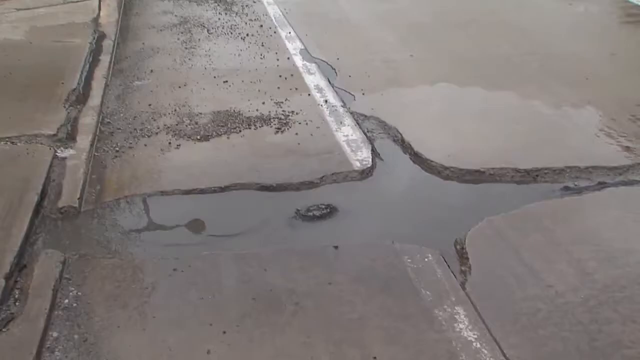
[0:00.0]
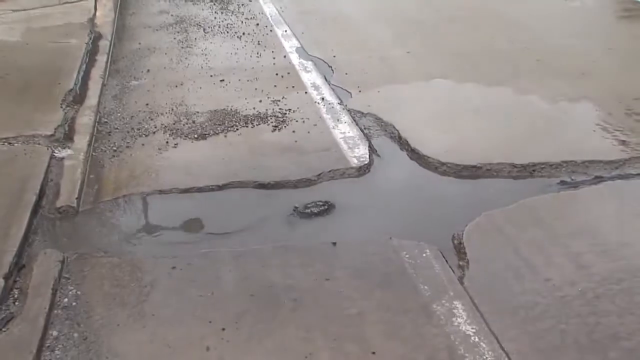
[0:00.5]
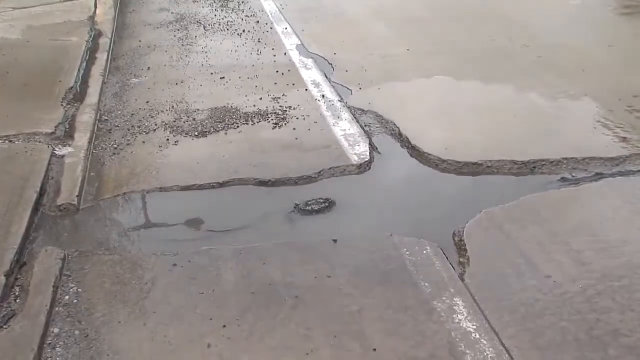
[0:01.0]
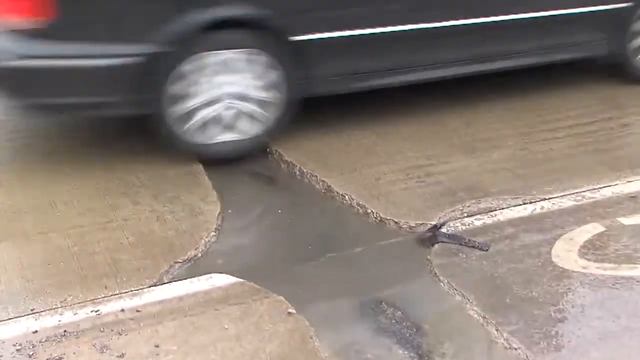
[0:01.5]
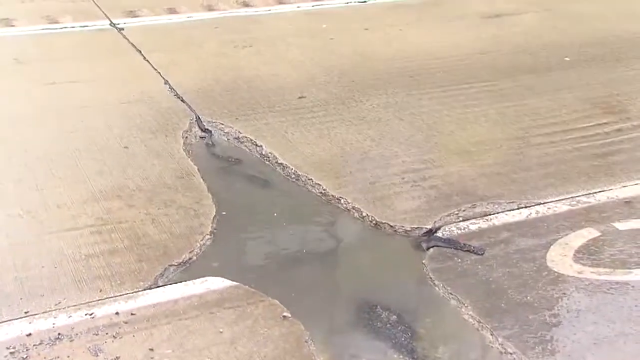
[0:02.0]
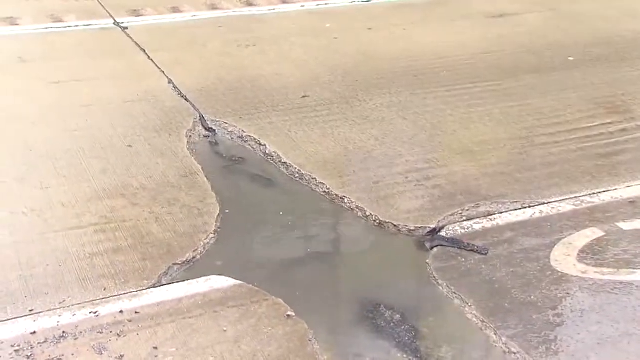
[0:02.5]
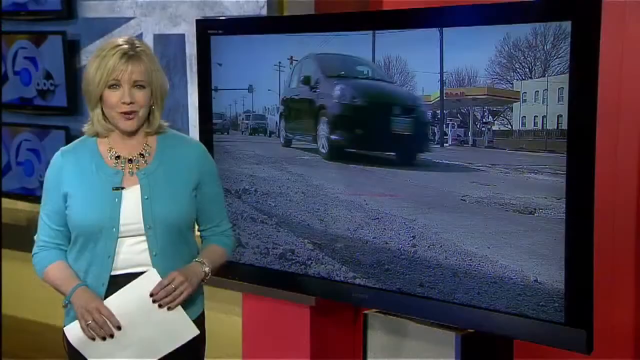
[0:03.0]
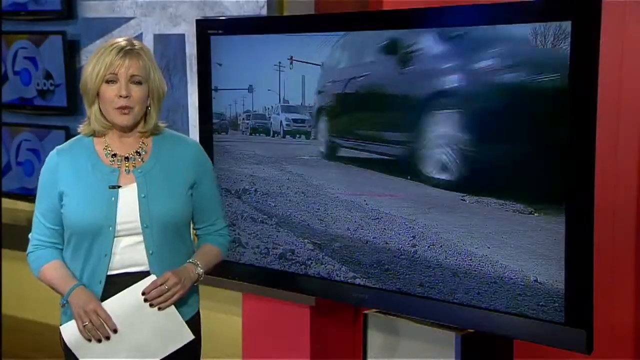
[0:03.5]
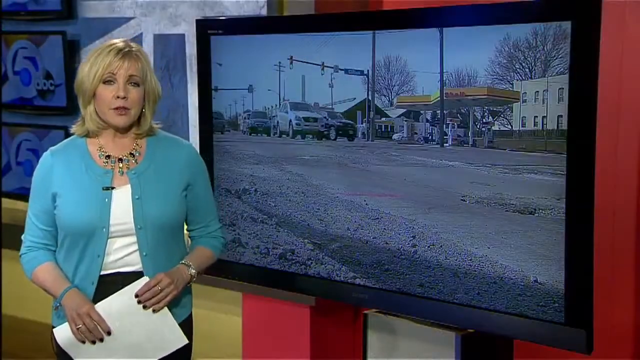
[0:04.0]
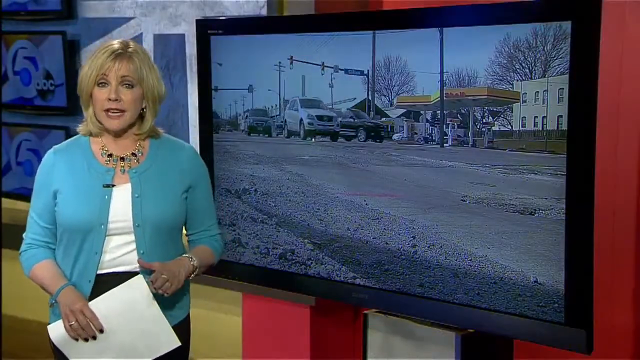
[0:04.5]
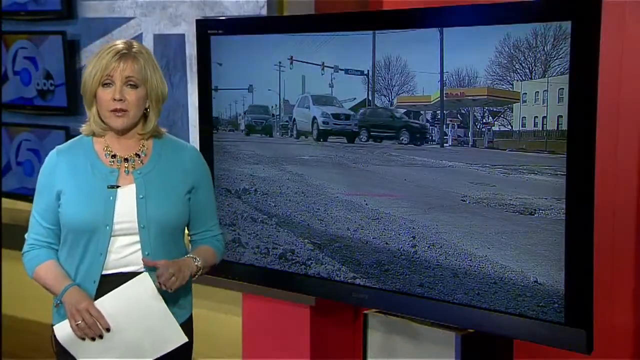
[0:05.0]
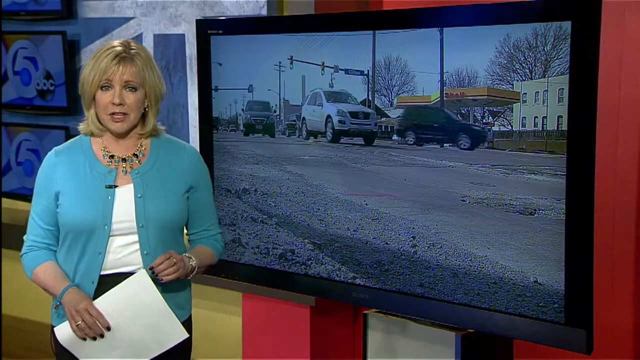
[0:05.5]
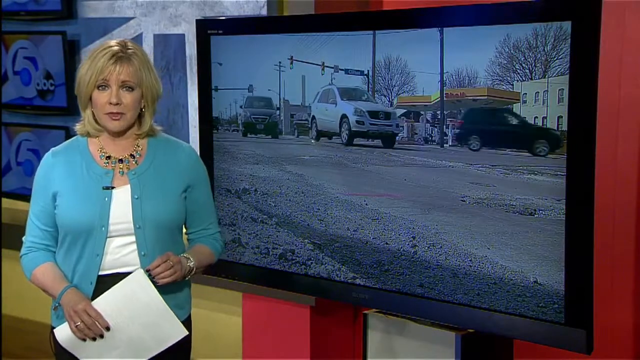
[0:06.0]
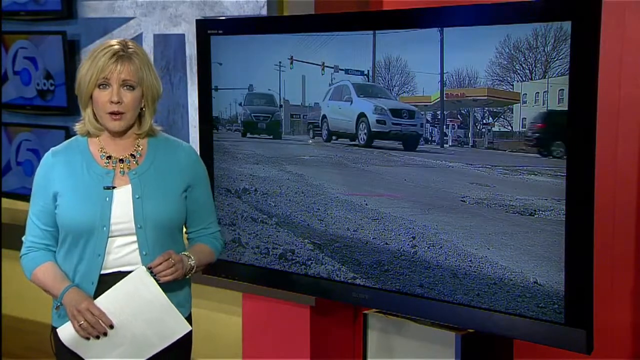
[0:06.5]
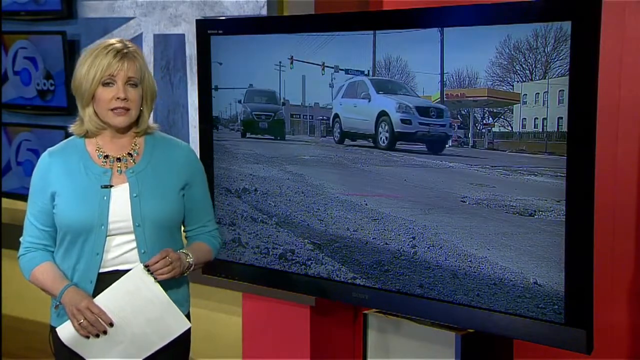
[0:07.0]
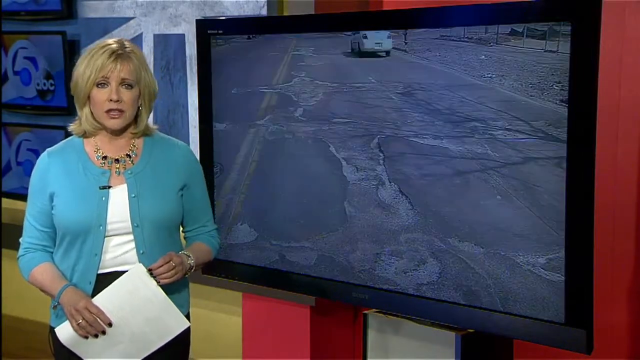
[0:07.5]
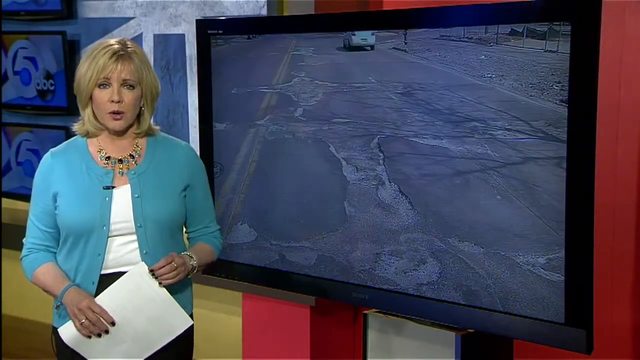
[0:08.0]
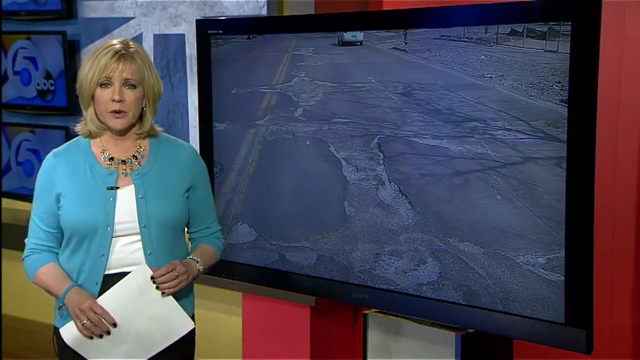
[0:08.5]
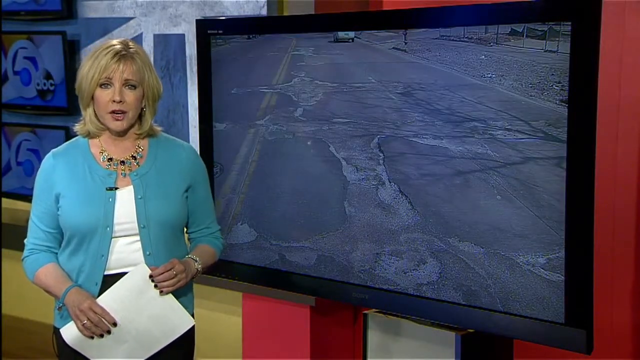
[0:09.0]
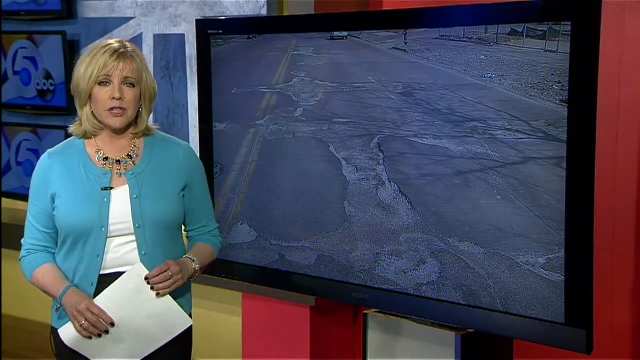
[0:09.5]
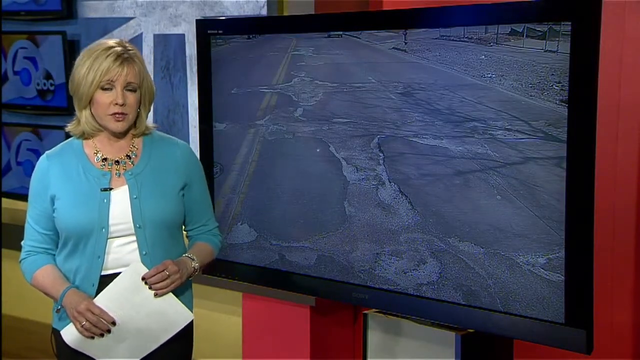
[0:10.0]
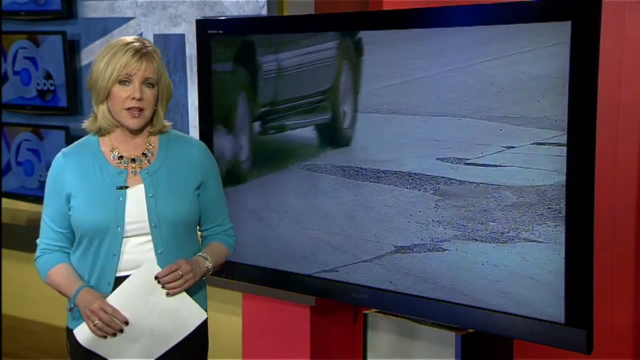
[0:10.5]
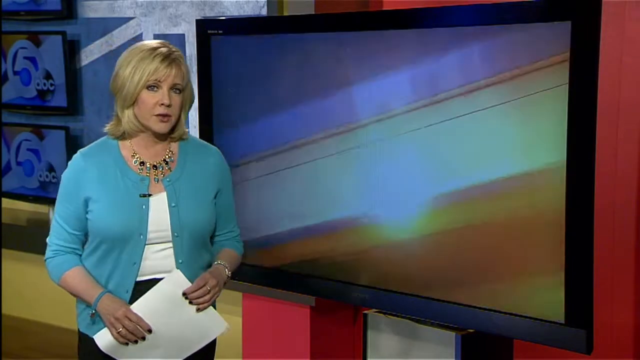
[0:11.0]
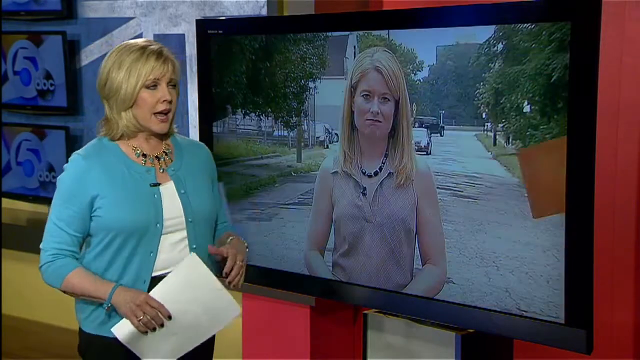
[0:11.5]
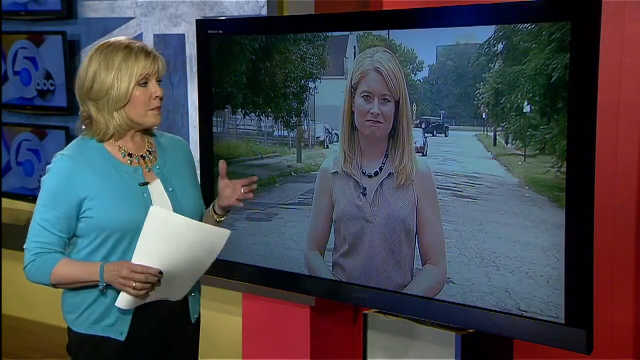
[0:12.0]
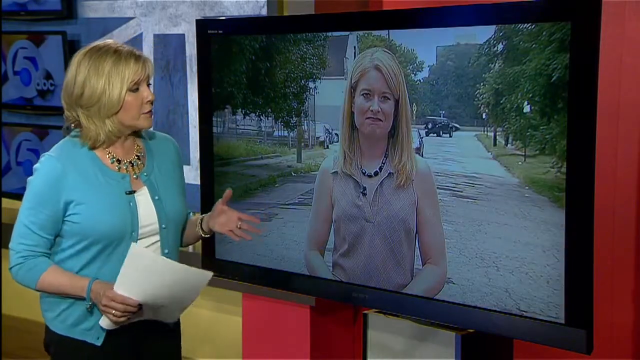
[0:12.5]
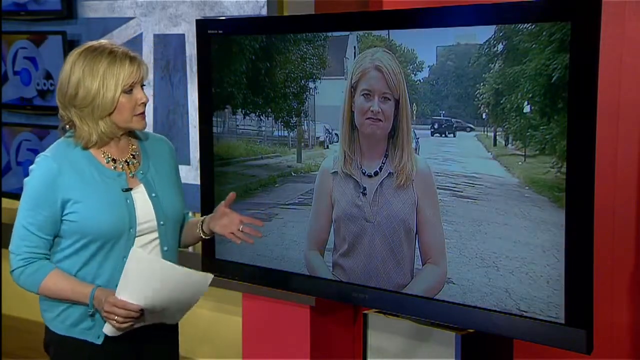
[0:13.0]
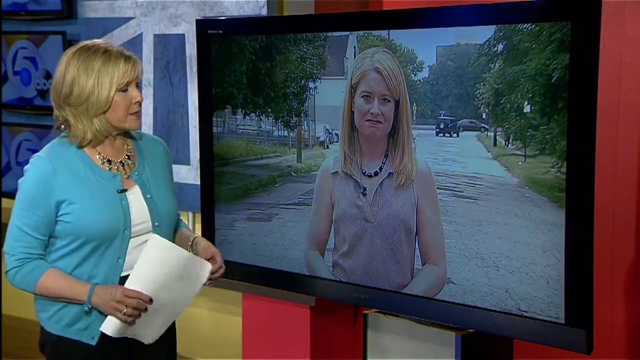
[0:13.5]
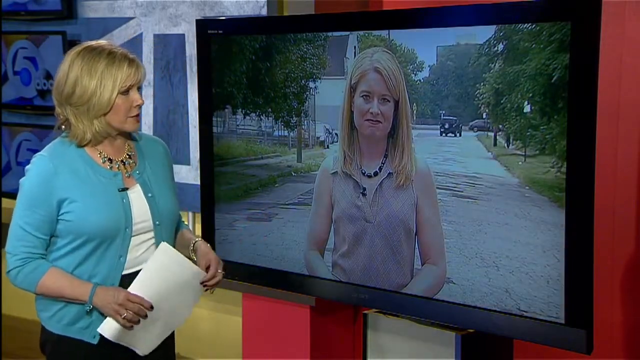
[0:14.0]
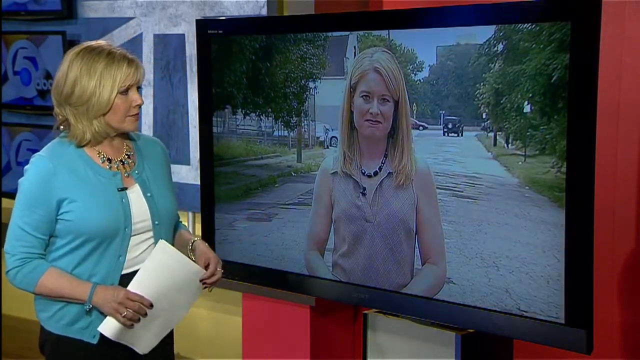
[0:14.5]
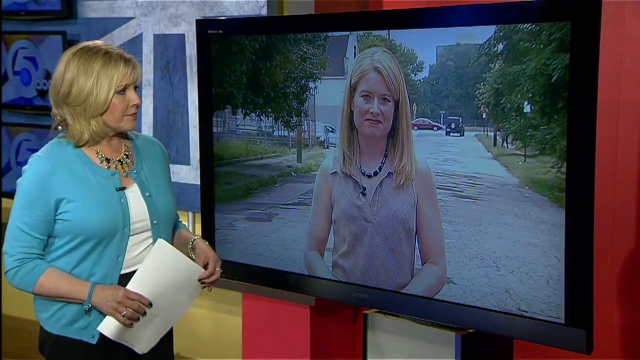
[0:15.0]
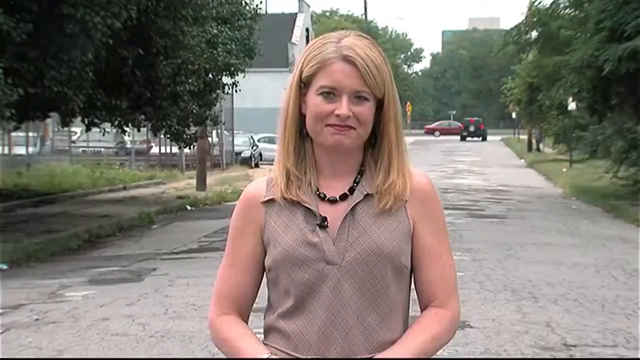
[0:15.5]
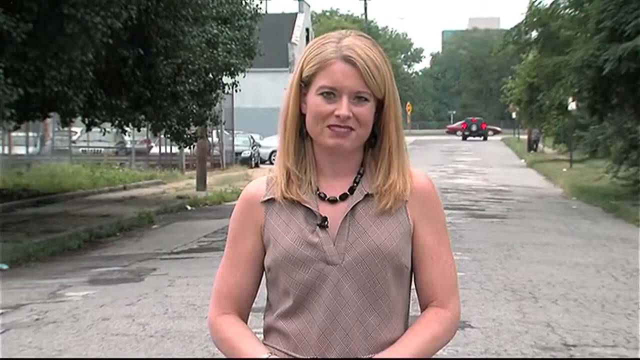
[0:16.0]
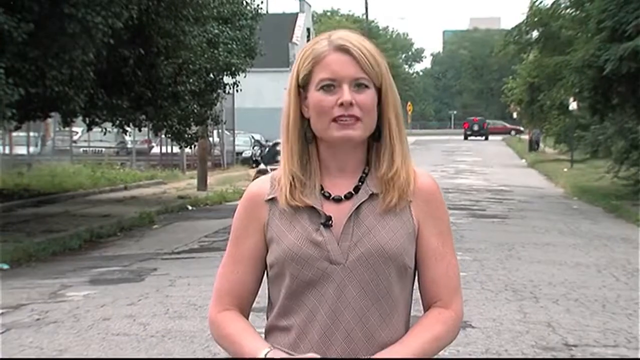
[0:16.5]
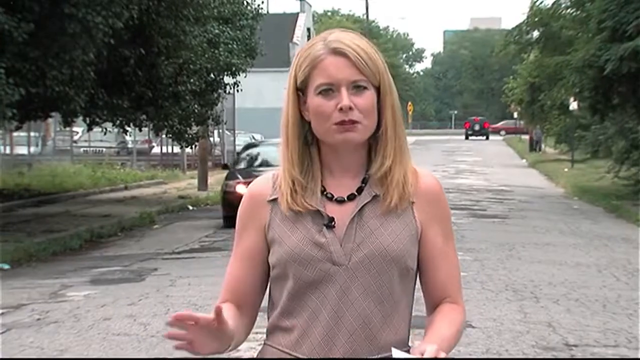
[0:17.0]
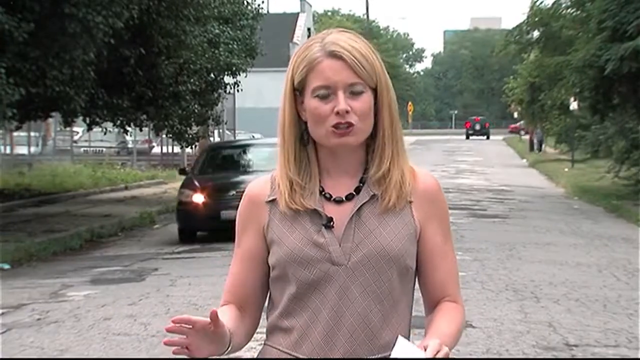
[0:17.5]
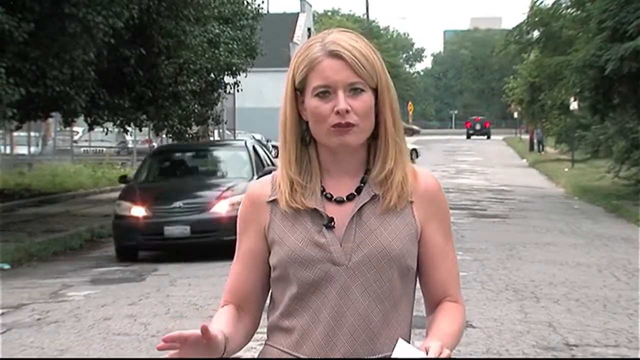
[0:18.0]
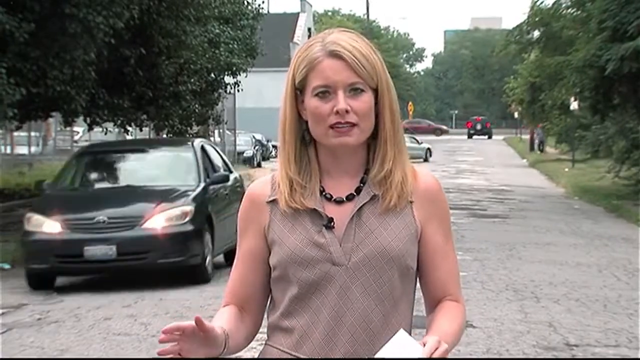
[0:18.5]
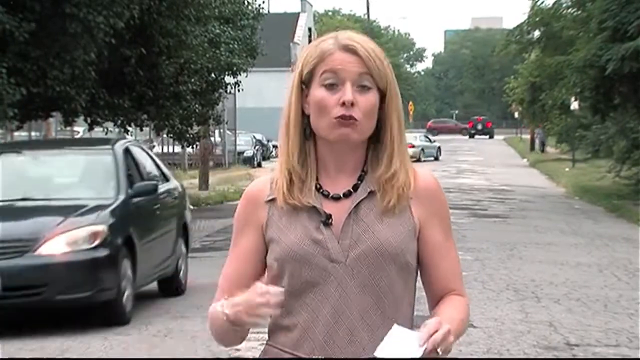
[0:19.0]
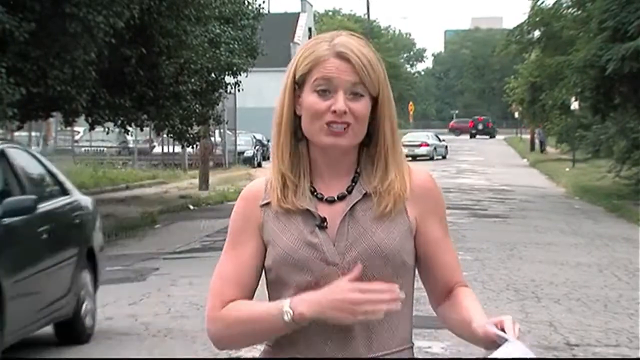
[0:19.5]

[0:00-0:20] A news report about potholes and road conditions opens with footage of a pothole on a cracked road, with stagnant water sitting in it. The shot shifts to a vehicle passing the pothole, where the water is still stagnant. In the newsroom, a lady holds papers; she wears a blue top, white top and a black dress. Beside her is a TV screen showing many cars passing and a traffic light, with the cars slowing down at the potholes on the poor road. The scene shifts to a lady on the ground who responds to the lady in the newsroom. She is then shown on the ground near the potholes, with vehicles coming from behind her as she speaks about the condition of the road. Trees, other parked vehicles and houses are visible, and the road is in poor condition.